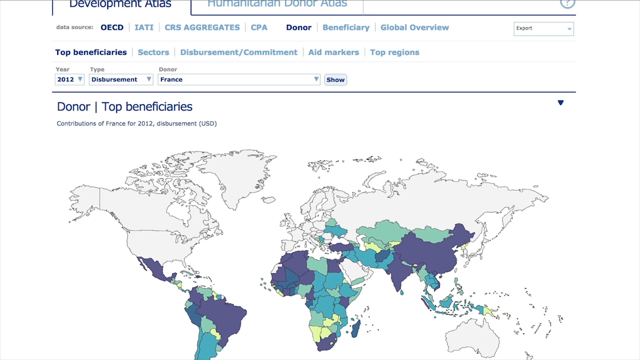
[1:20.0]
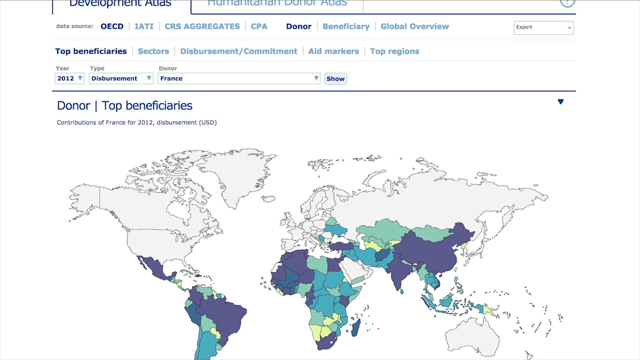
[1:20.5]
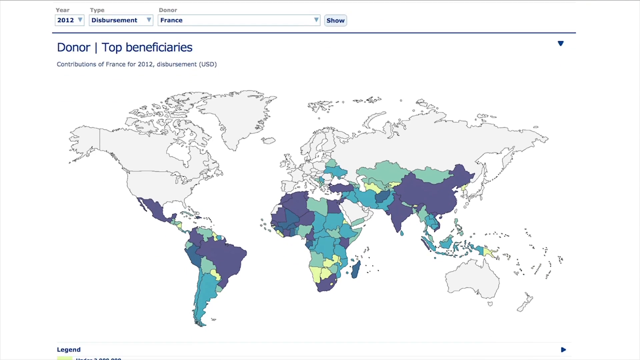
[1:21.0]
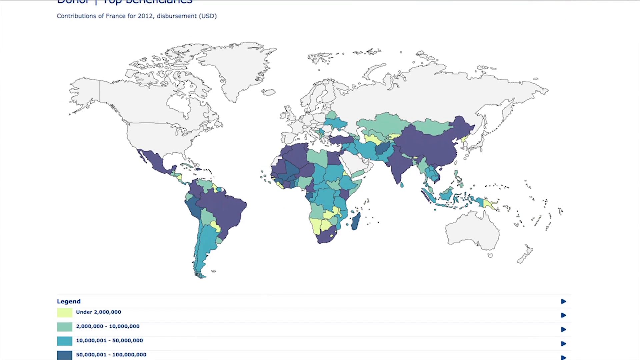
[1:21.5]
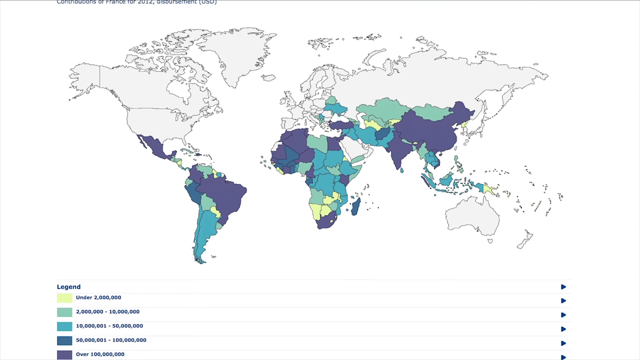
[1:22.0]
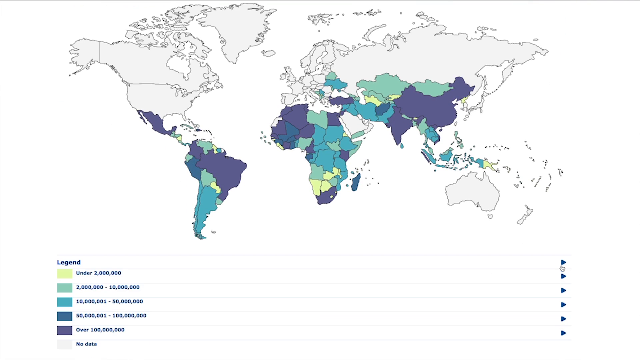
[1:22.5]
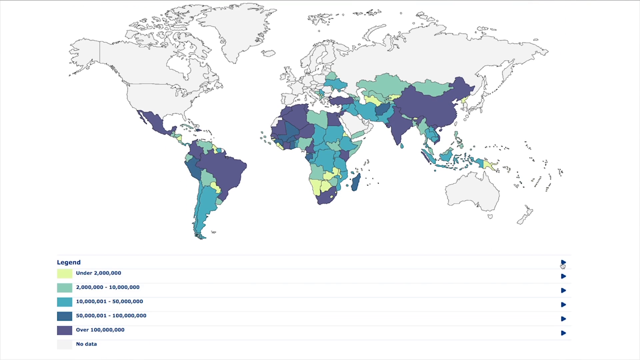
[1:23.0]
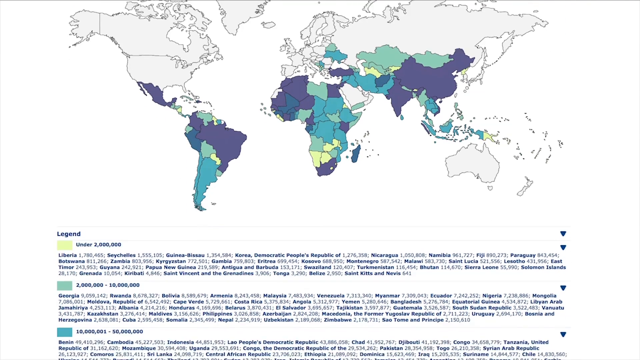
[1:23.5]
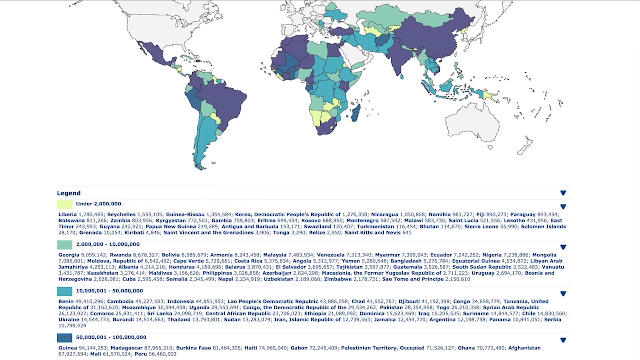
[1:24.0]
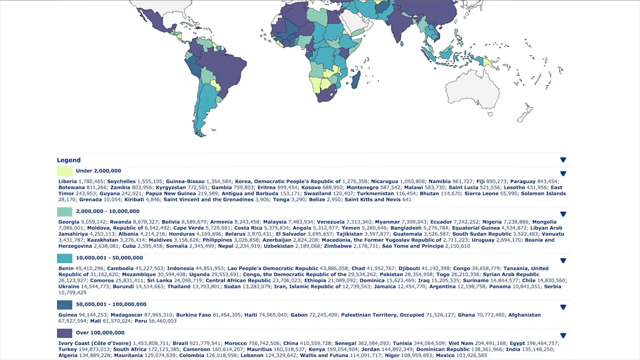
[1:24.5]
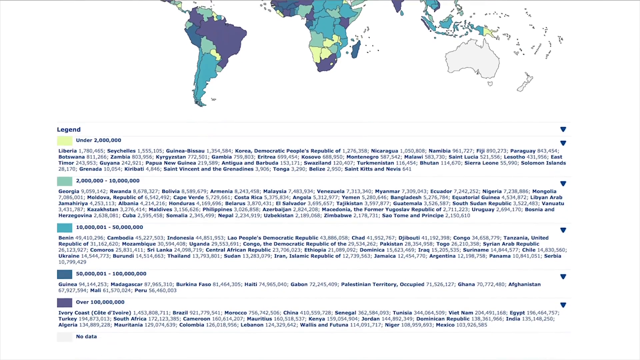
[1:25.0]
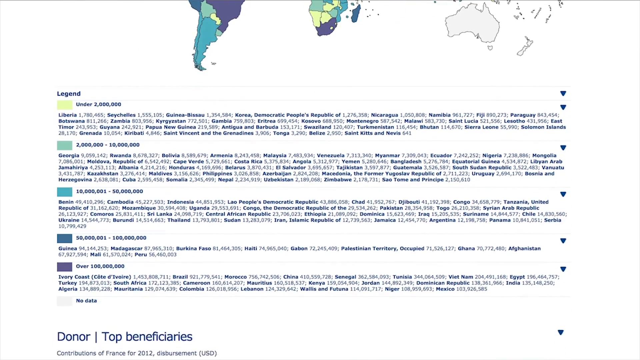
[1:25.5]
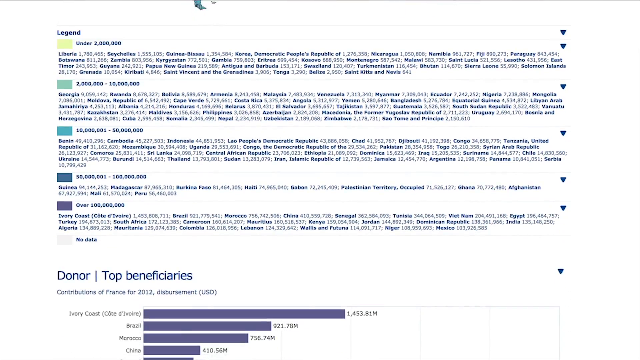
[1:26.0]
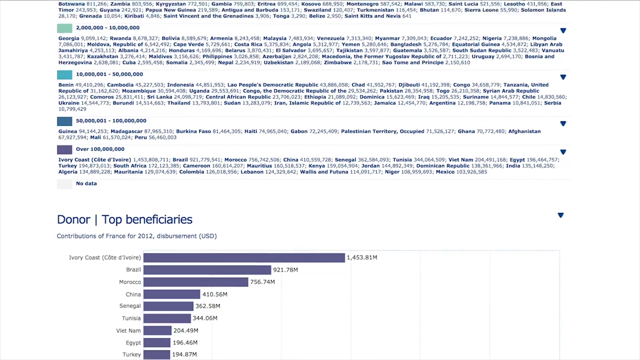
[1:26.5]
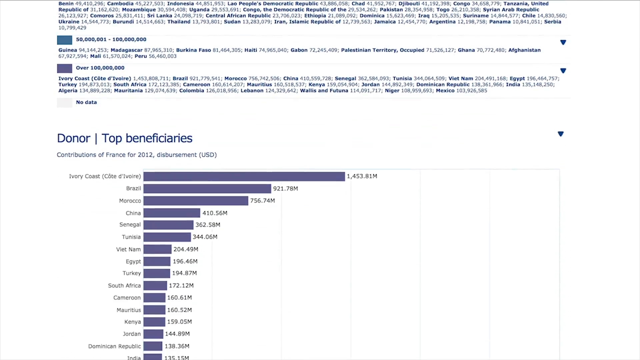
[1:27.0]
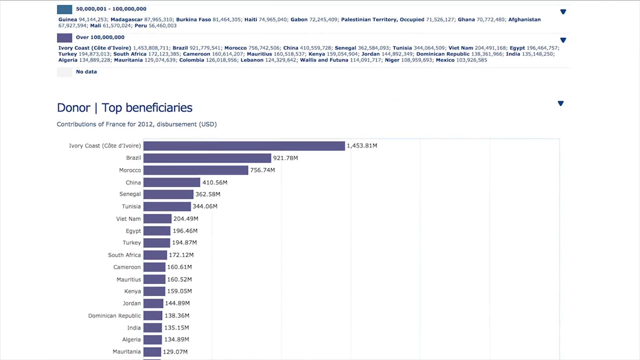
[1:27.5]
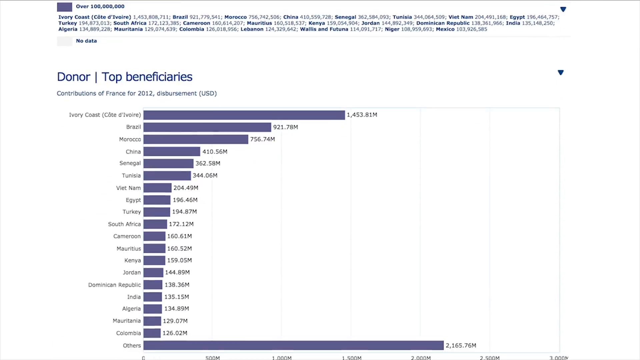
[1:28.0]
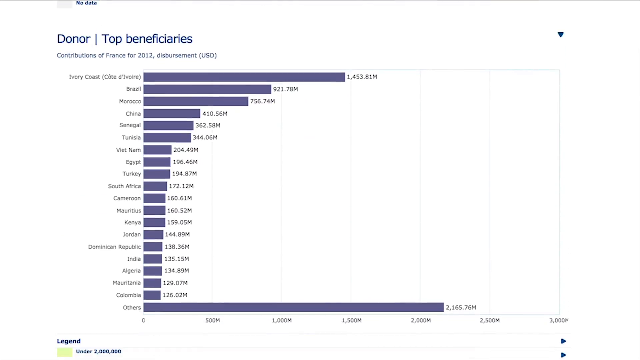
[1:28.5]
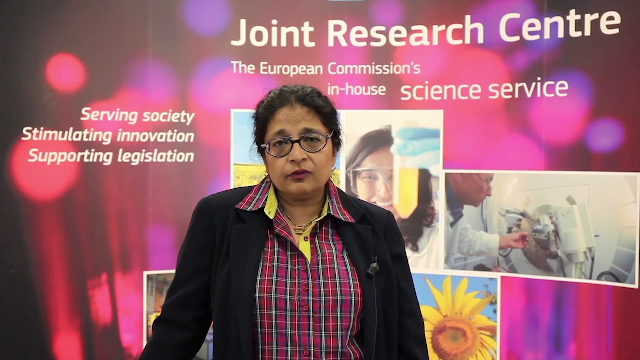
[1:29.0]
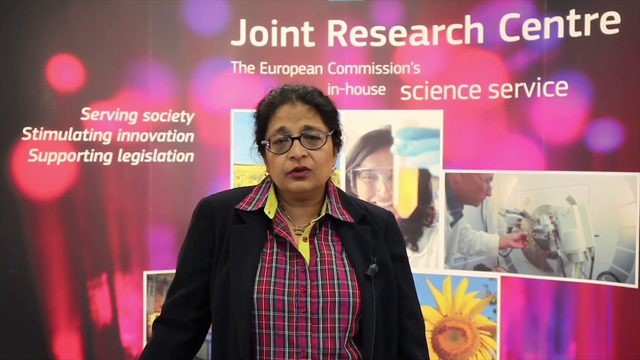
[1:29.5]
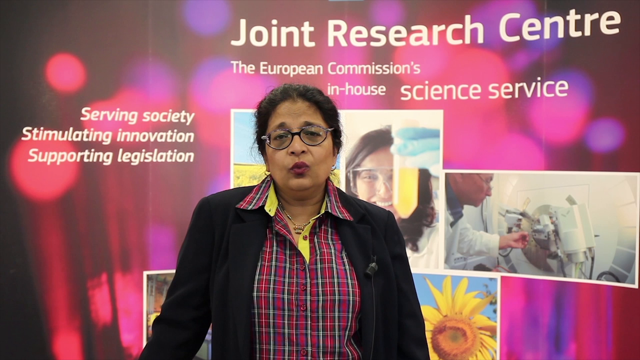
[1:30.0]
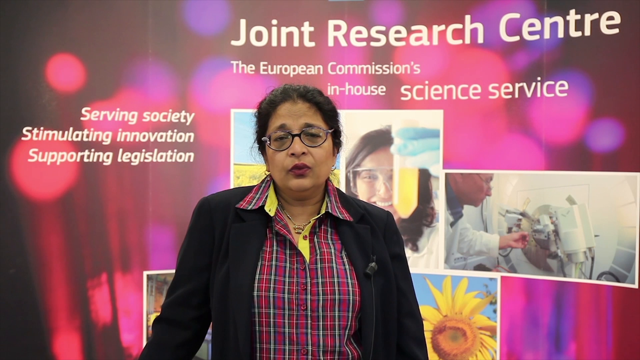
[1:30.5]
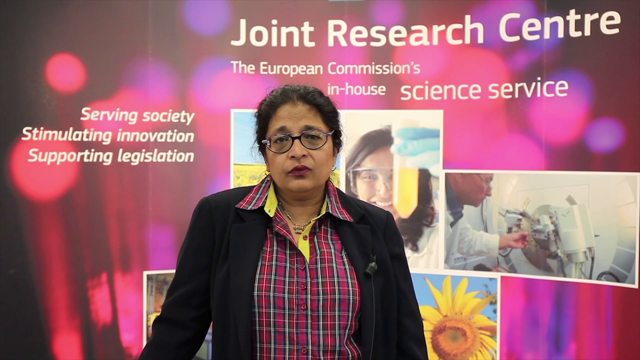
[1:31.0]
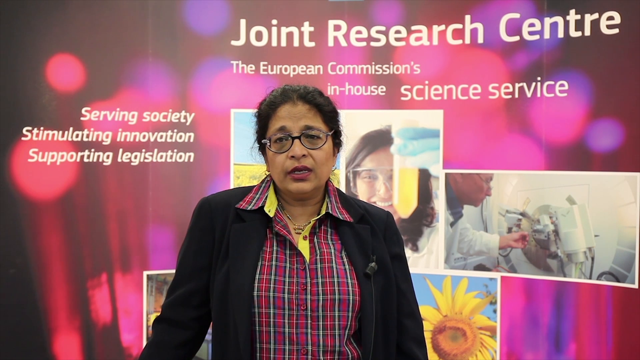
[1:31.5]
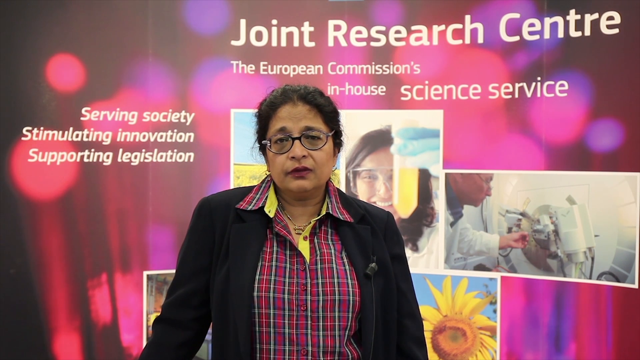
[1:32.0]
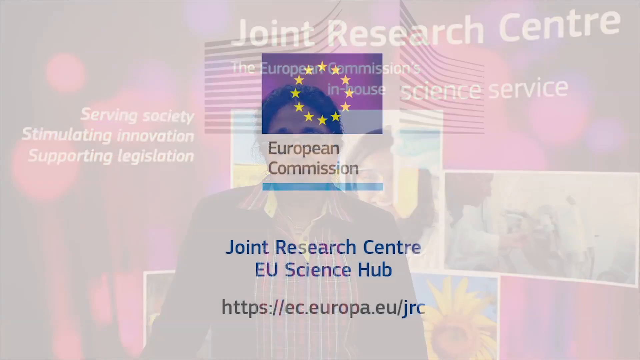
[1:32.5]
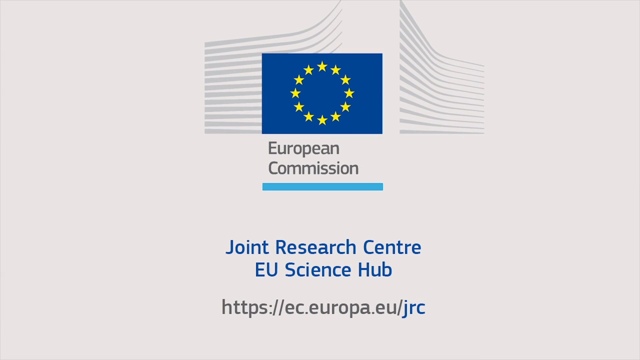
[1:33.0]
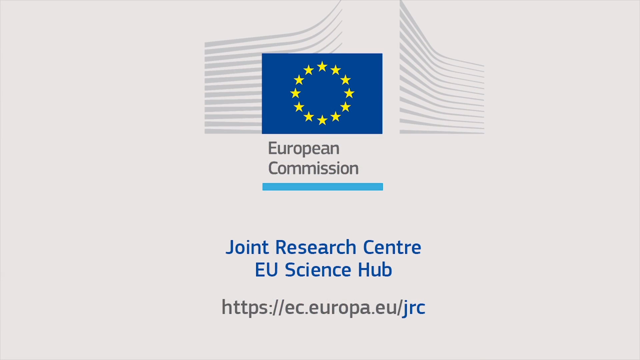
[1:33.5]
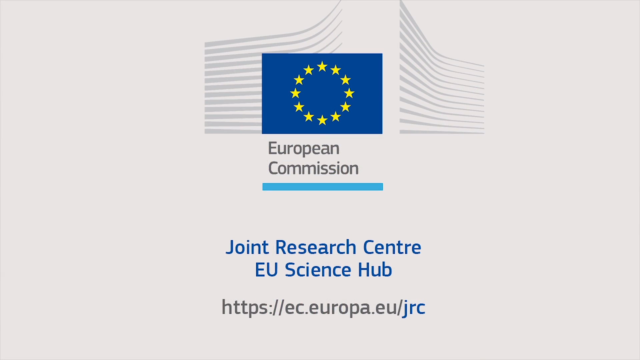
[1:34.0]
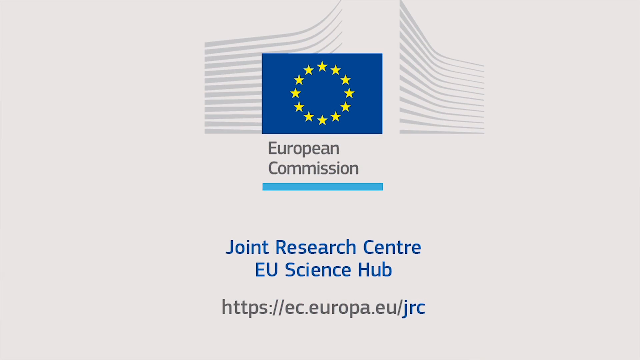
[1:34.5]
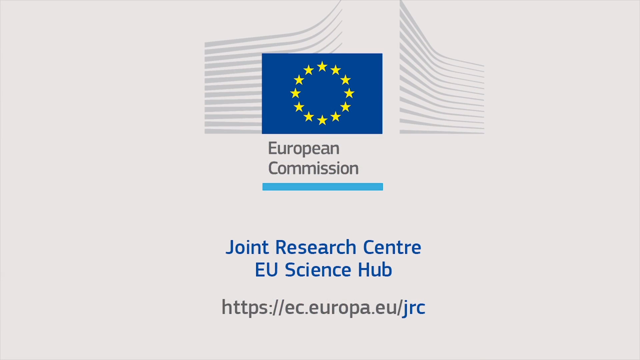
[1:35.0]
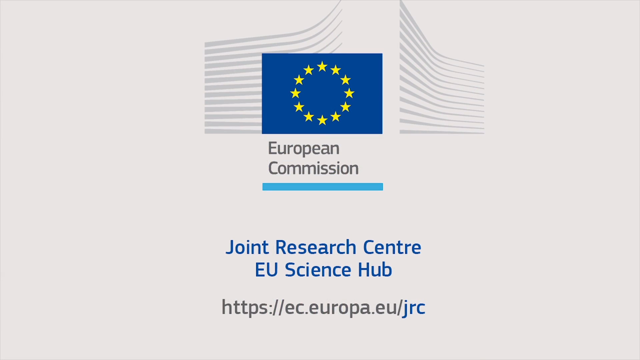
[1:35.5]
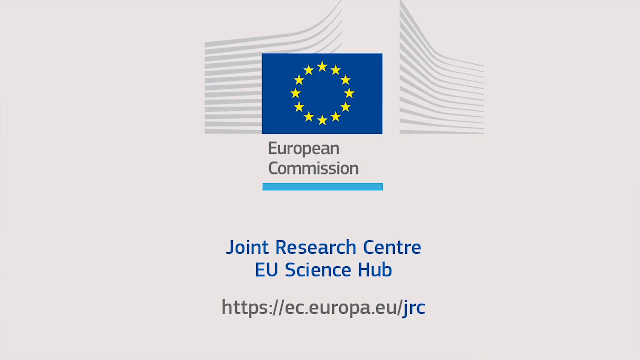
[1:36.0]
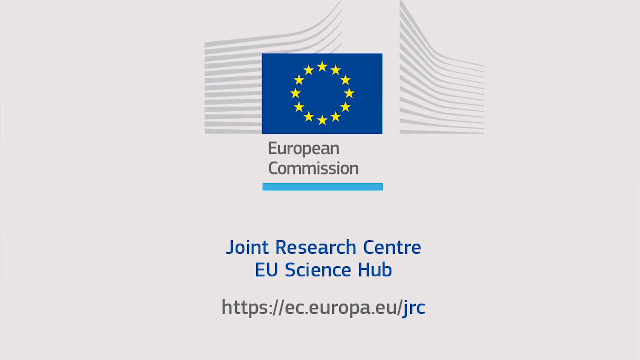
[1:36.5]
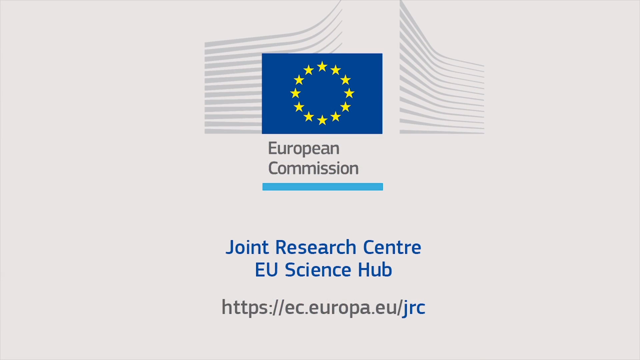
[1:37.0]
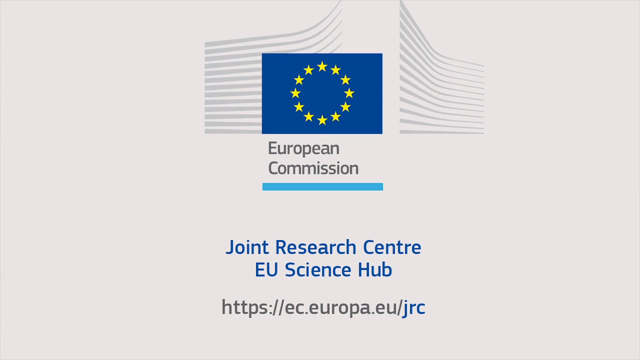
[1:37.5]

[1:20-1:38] A website, apparently of the EU Office of Economic Development, shows a Humanitarian Donor Atlas. It is a map labeled "Development Atlas" showing the top beneficiaries of aid, mostly in the global south: parts of Africa, Asia, the Middle East, South America and Mexico. Different colors signify how much money was given, with the darkest colors for the most money and yellow for the least. The site then shows which countries were the top beneficiaries, but the shot cuts out too quickly for them to be read.